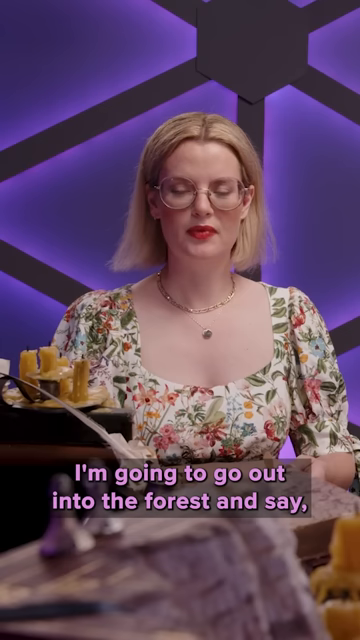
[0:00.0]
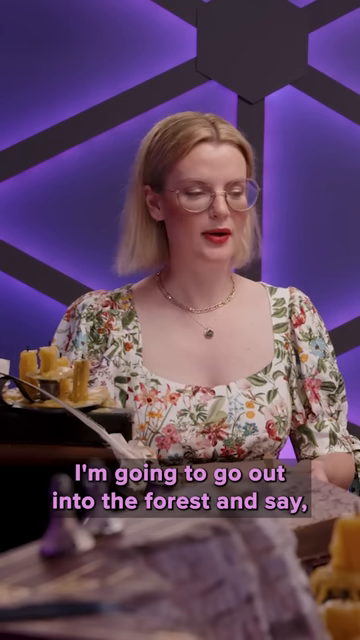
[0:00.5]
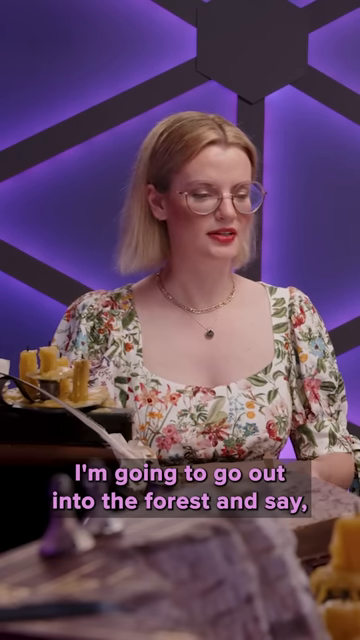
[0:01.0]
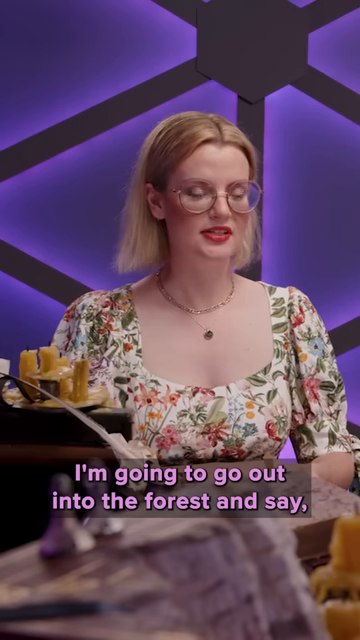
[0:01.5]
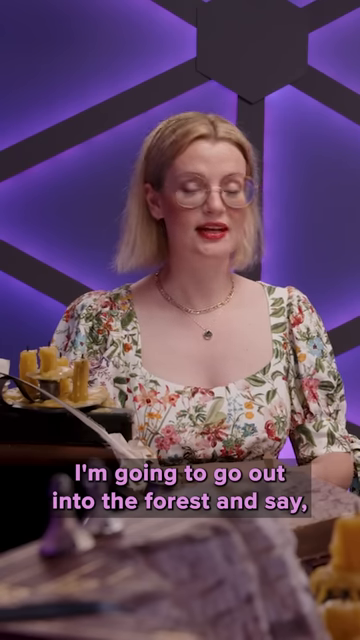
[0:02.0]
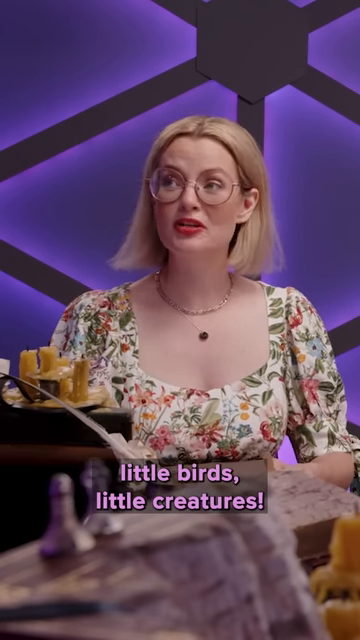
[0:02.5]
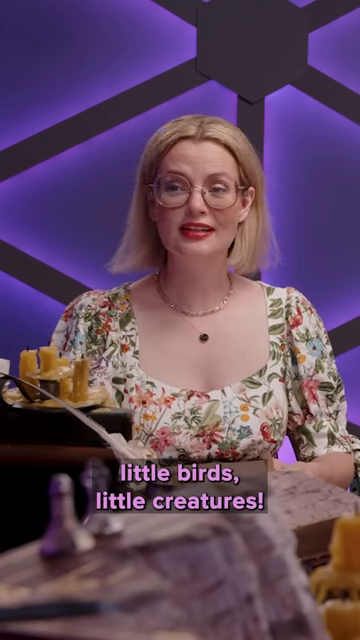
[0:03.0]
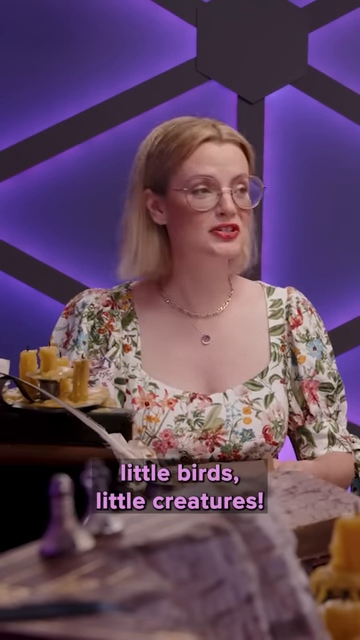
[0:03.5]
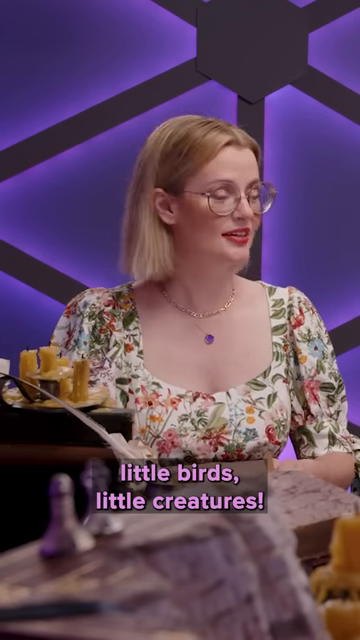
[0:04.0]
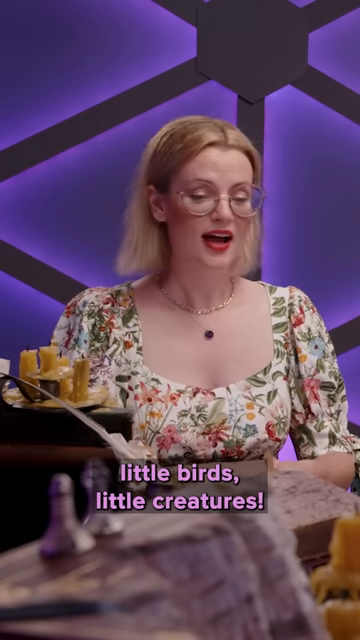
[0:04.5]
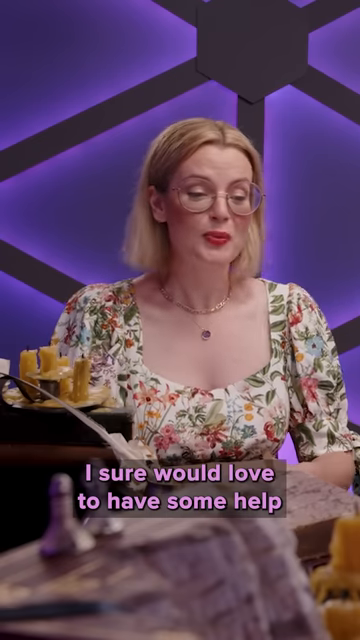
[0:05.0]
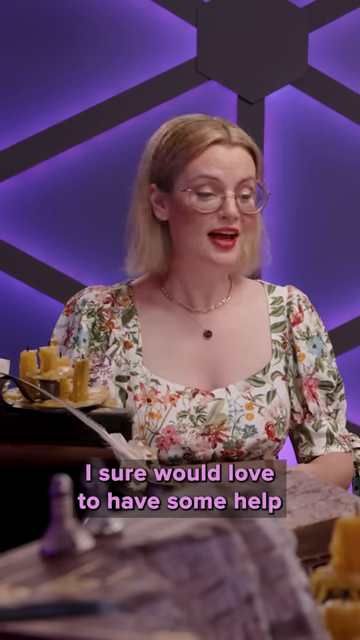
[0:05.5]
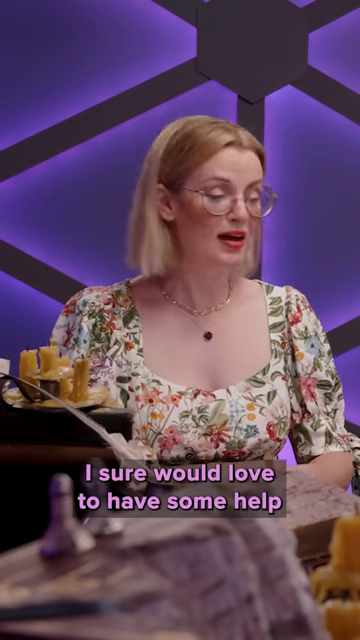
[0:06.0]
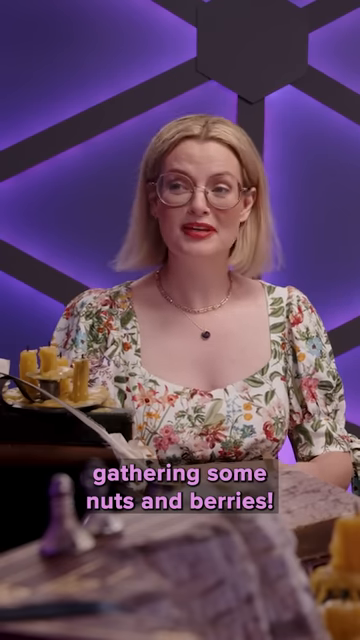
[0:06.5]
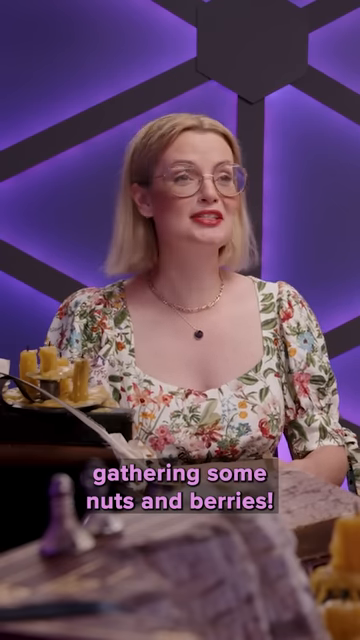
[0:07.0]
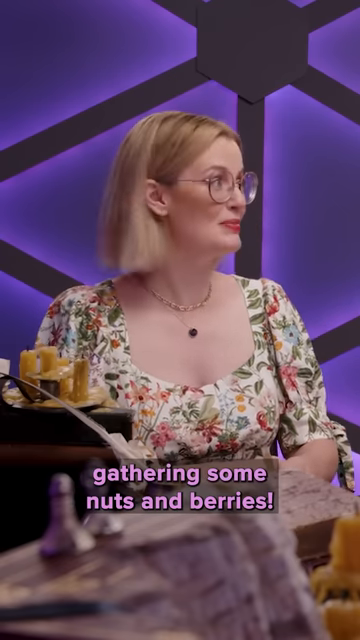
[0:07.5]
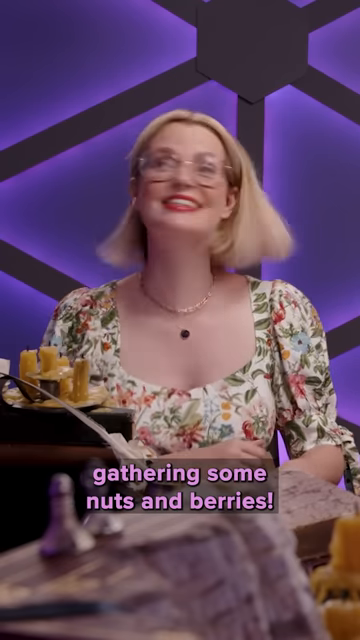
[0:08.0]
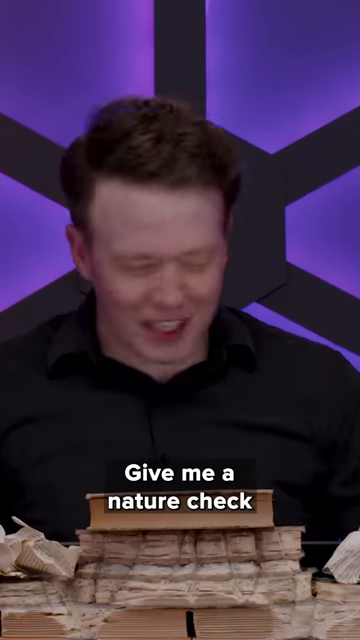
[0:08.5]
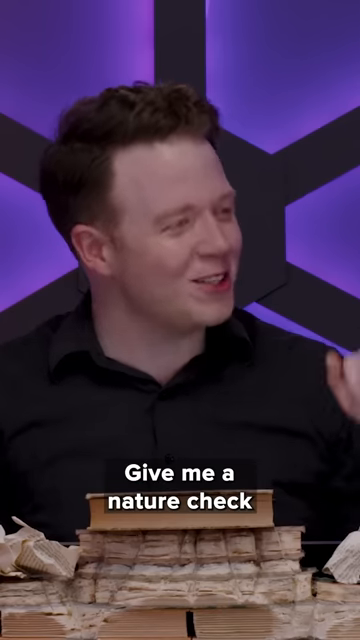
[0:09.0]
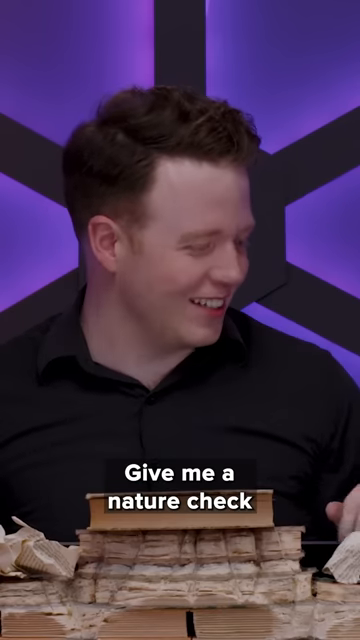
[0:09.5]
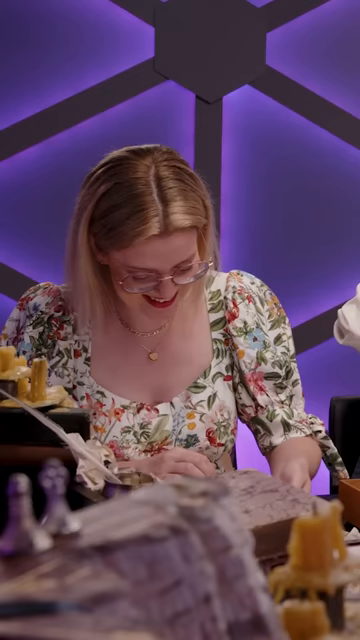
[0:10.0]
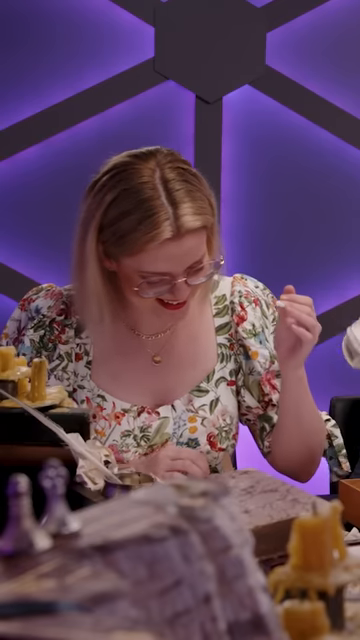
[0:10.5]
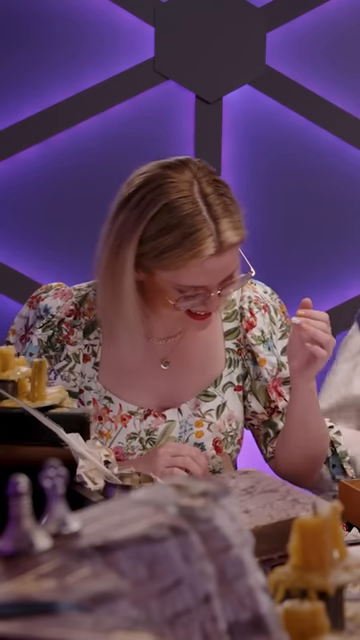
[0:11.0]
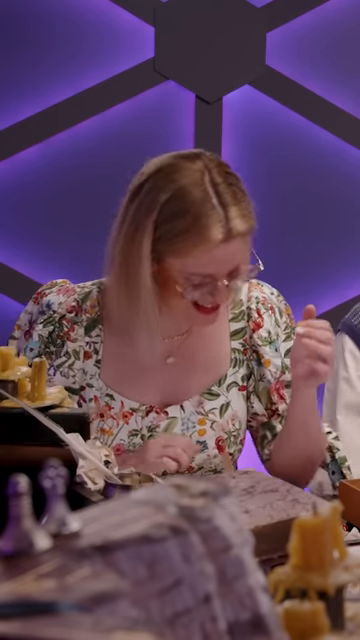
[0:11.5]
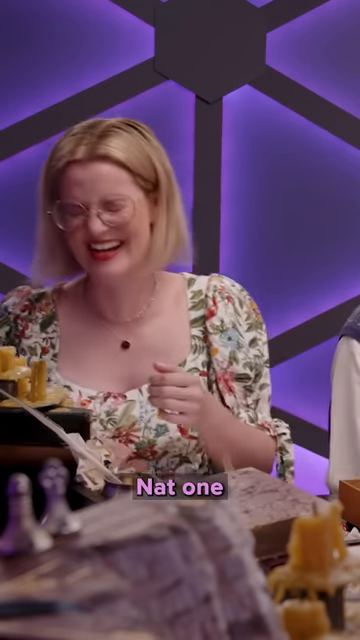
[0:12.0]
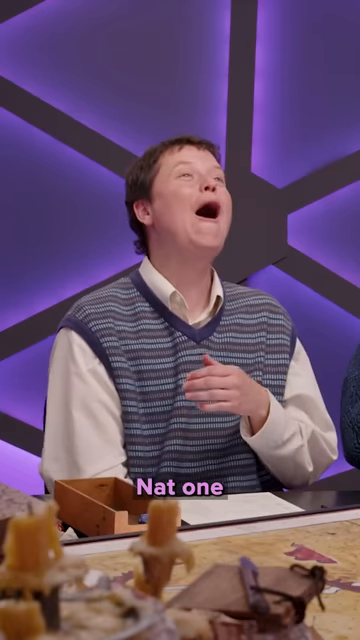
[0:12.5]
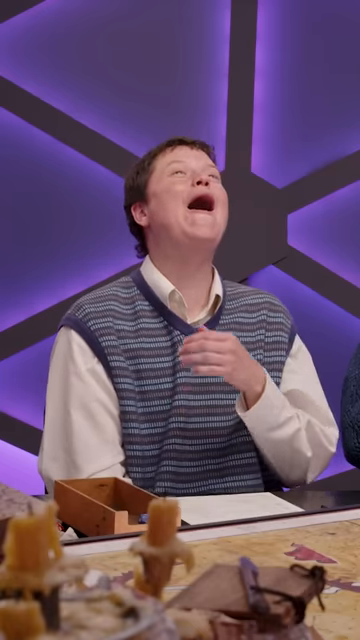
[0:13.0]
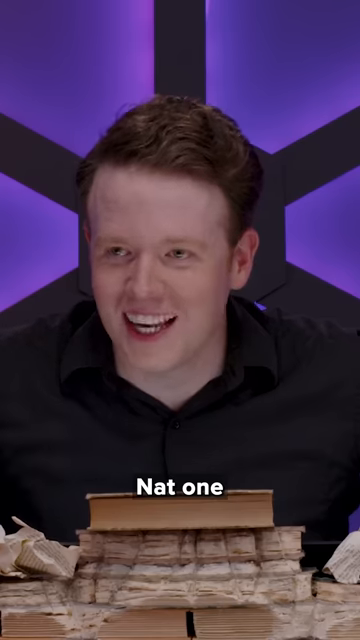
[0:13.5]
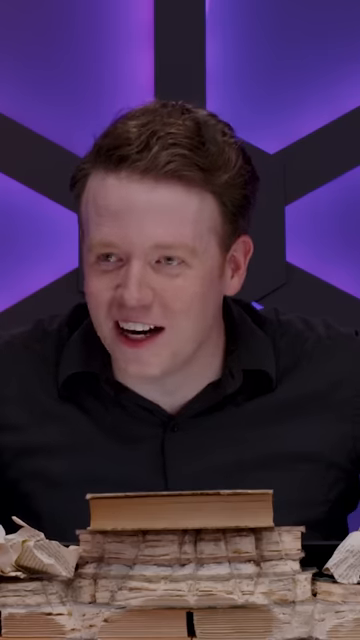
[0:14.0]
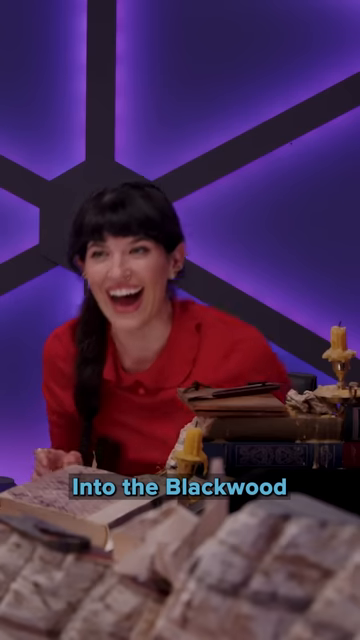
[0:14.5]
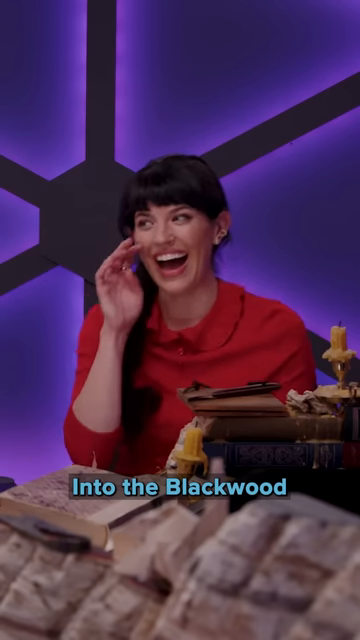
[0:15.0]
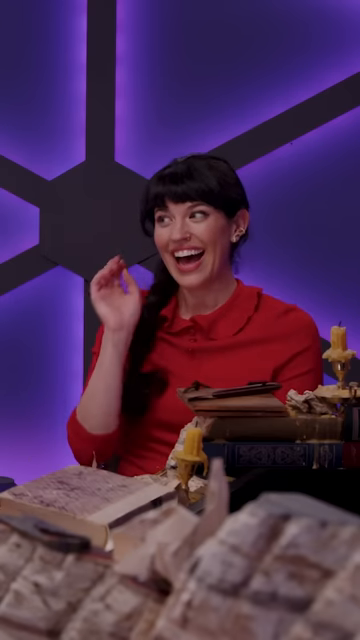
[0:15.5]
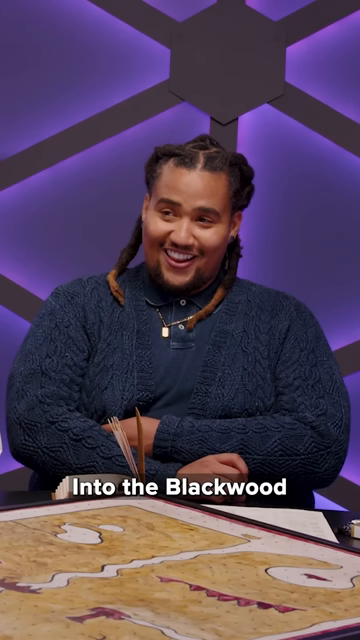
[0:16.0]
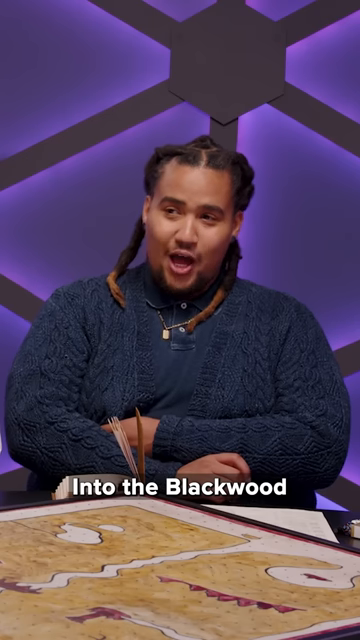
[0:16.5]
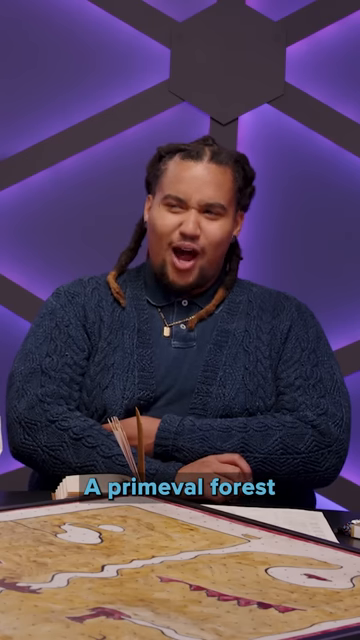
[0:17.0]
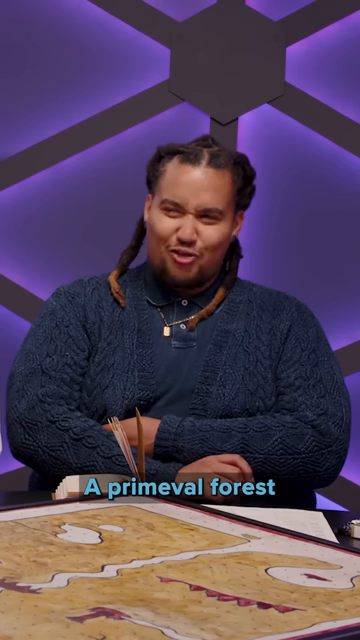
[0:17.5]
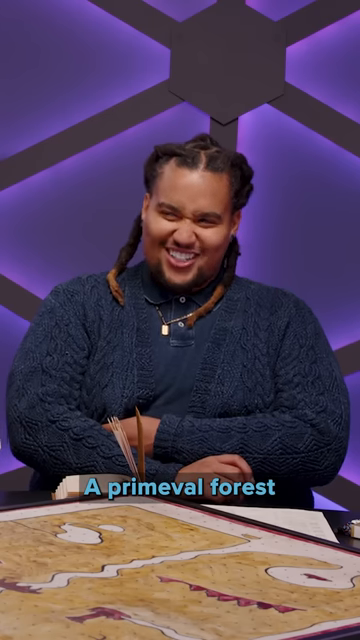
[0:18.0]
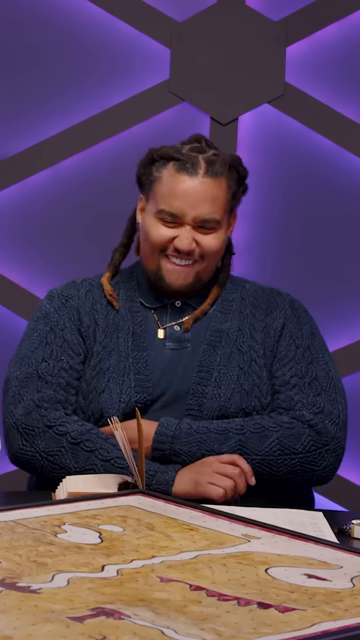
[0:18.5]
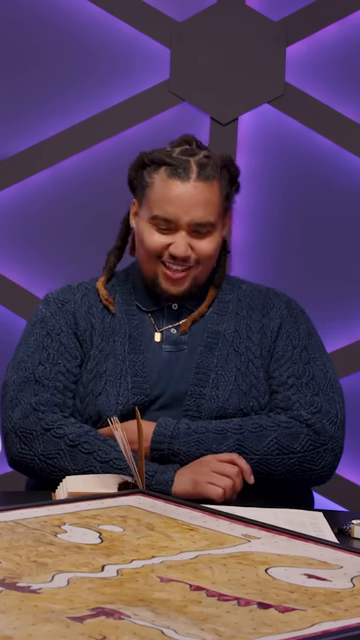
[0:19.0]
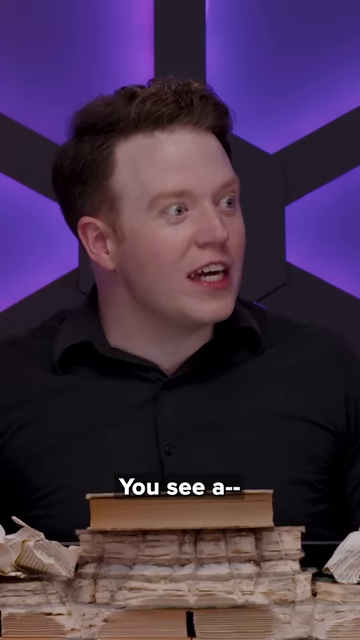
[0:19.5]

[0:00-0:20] A woman wears very circular glasses, kind of like Harry Potter glasses. Her short hair ends at the back of her neck, and she wears a very floral bohemian dress. Light purple text appears on screen: "I'm going to go out into the forest and say, little birds, little creatures." She looks slightly toward the camera as she keeps talking, then slightly turns her head. More purple text appears, "I sure would love to have some help," and she slightly shakes her head. Further text reads "gathering some nuts and berries." She becomes very whimsical, moving her body and laughing. The scene changes to a man with very short brown hair whose head is kind of lowered to his right; a variety of objects lie in front of him, kind of looking like books. Smiling, he turns toward the woman, and white text reads "give me a nature check." He looks down, and the scene returns to the woman, who is looking down with her hand slightly raised, apparently looking at or reading something. She squints and then begins to laugh. The scene changes to a different person with short brown hair, hard to tell whether a woman or a man, who puts a hand up and laughs, with purple text at the bottom reading "Nat 1." Back on the man with short brown hair and a black collared shirt, he laughs and then looks at the camera. Next is a different woman with black hair in a ponytail and a red shirt, with purple text at the bottom reading "into the black wood with a variety of different objects." She puts her hand up to her face as if to remove something while looking at someone. An African American man with his hair in braids crosses his arms and talks; teal text reads "a primeval forest," and he laughs with his lip and teeth kind of together. The scene then changes to a man who opens his mouth as white text reads "you see a..."